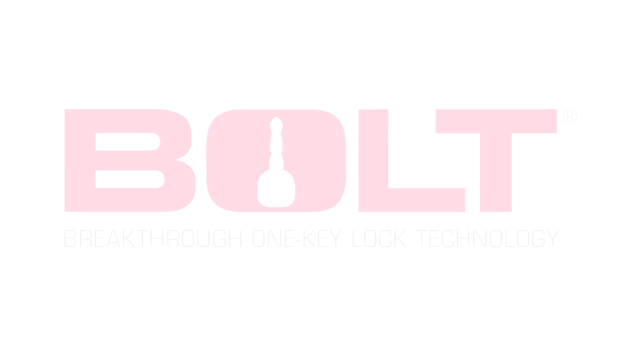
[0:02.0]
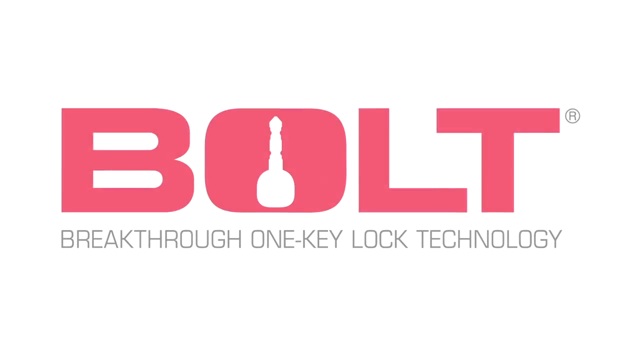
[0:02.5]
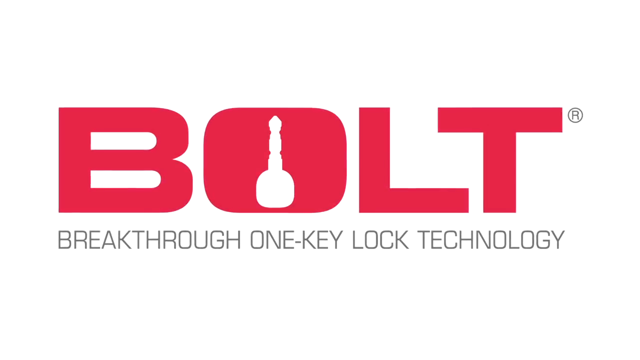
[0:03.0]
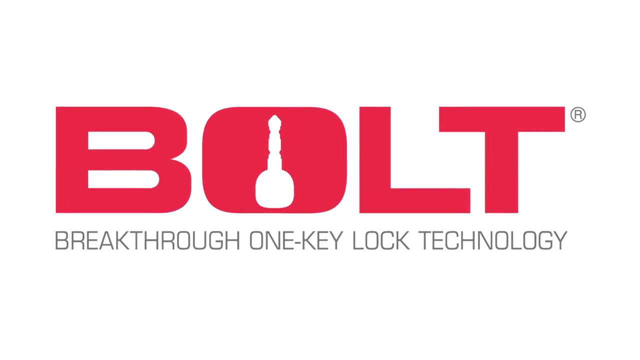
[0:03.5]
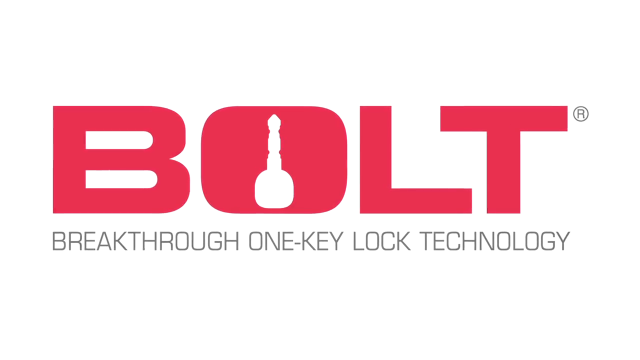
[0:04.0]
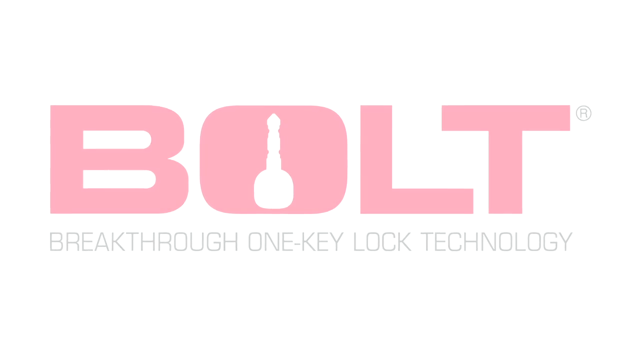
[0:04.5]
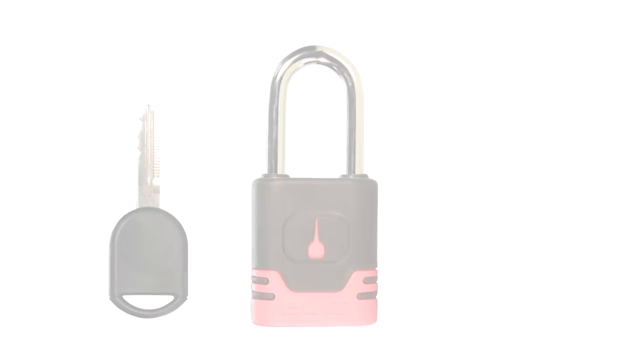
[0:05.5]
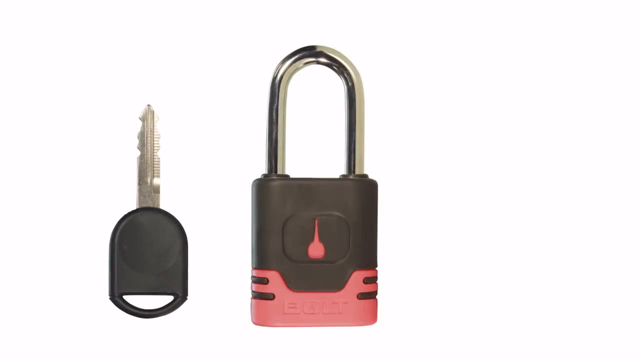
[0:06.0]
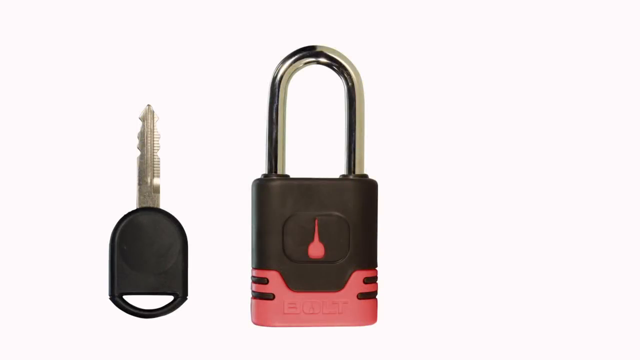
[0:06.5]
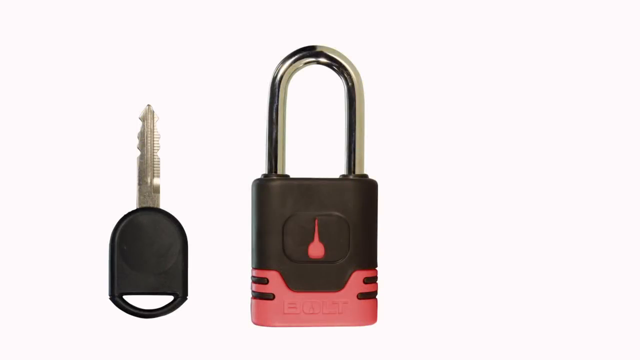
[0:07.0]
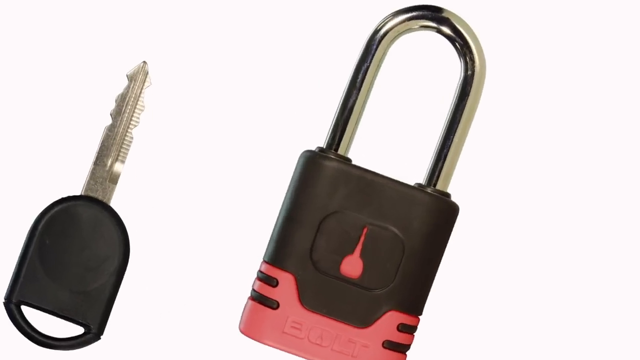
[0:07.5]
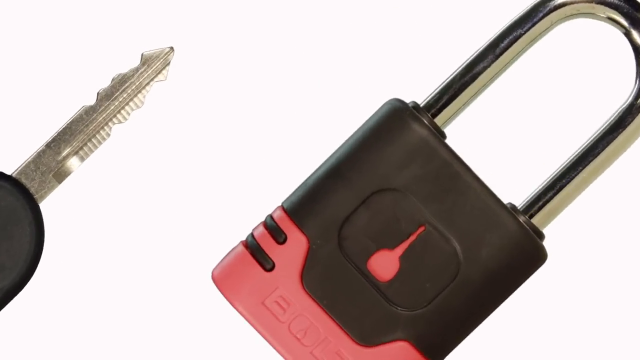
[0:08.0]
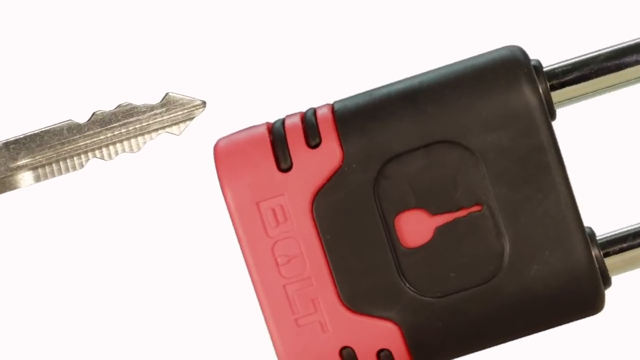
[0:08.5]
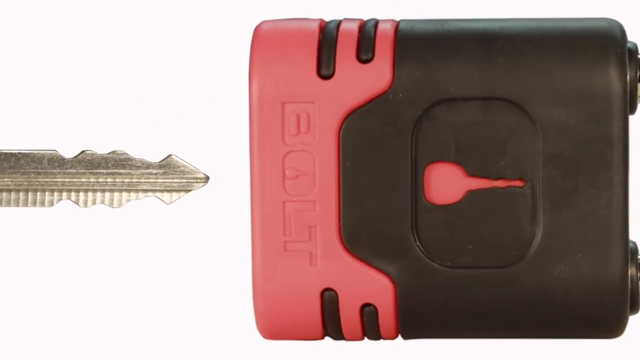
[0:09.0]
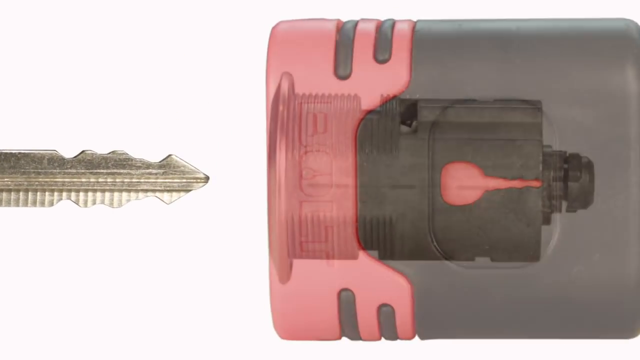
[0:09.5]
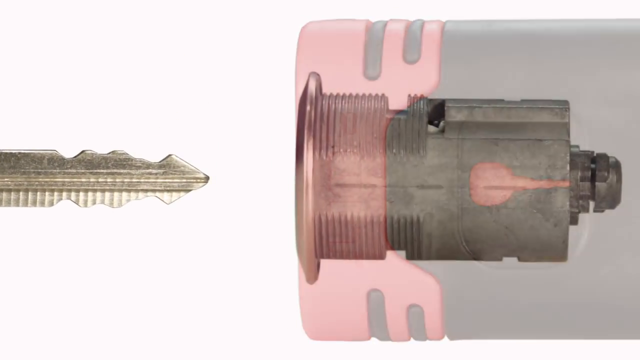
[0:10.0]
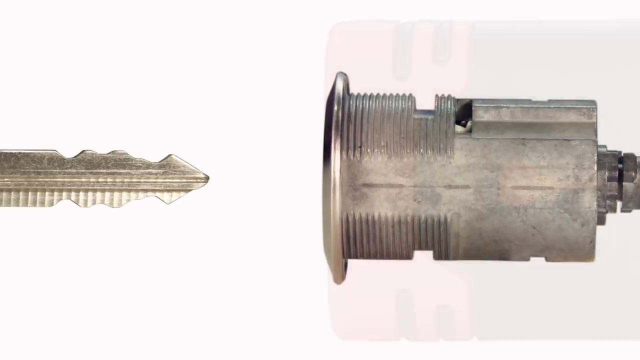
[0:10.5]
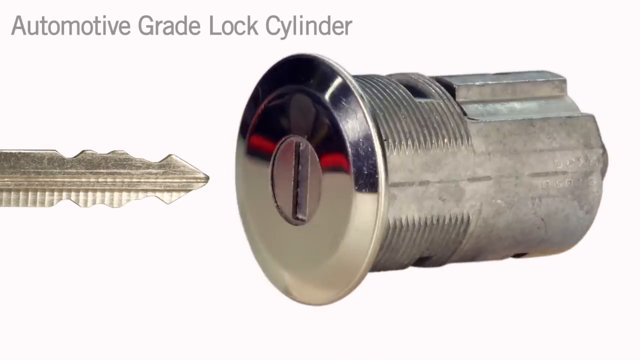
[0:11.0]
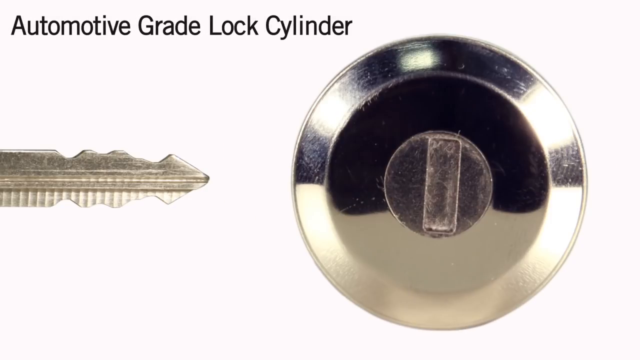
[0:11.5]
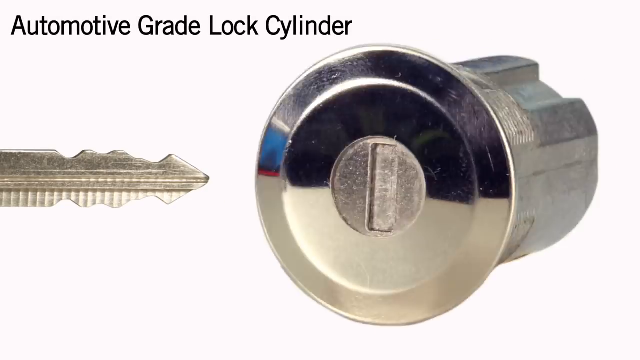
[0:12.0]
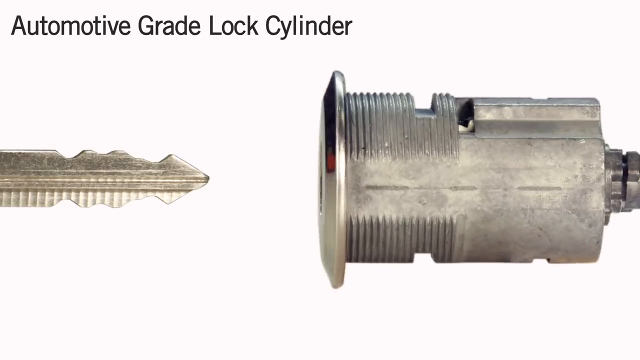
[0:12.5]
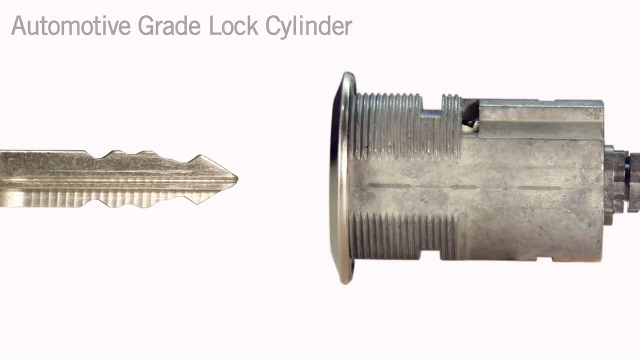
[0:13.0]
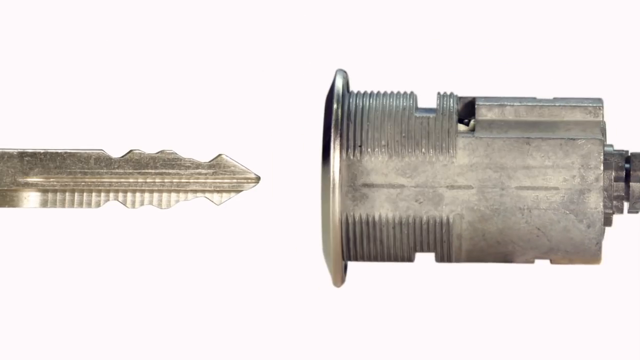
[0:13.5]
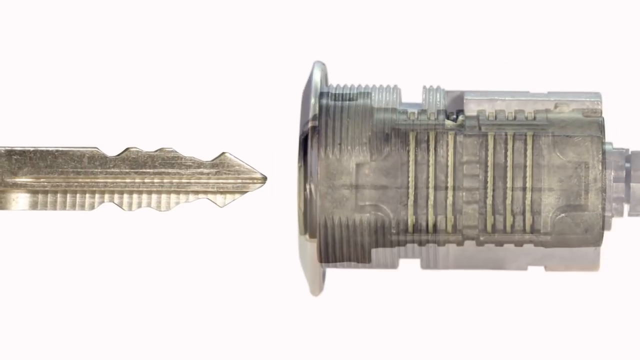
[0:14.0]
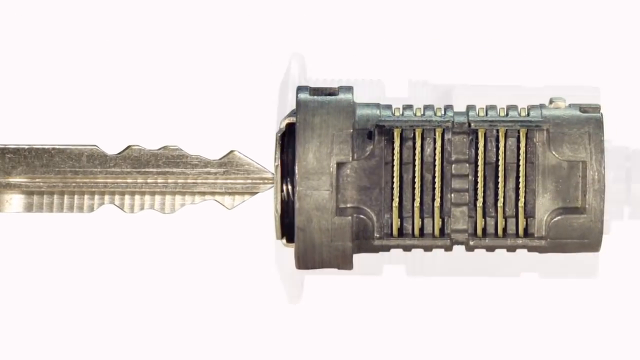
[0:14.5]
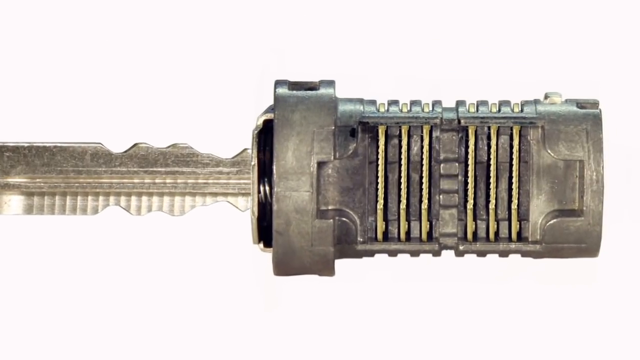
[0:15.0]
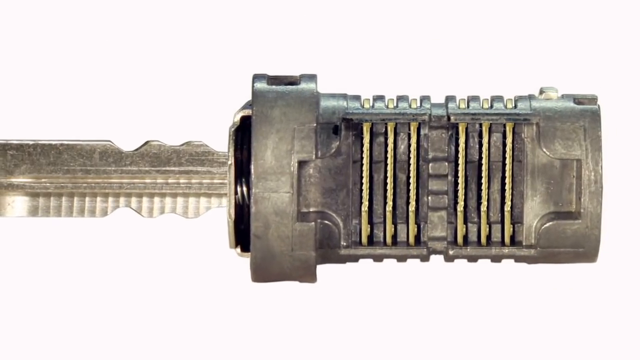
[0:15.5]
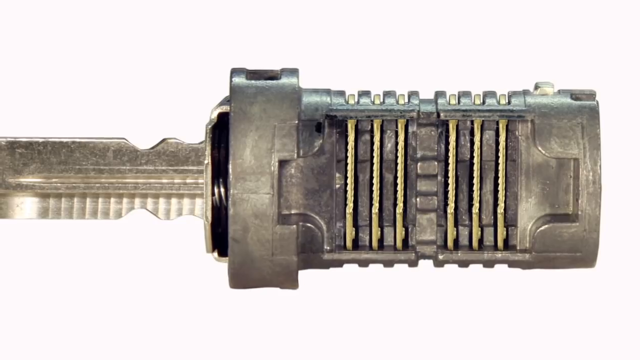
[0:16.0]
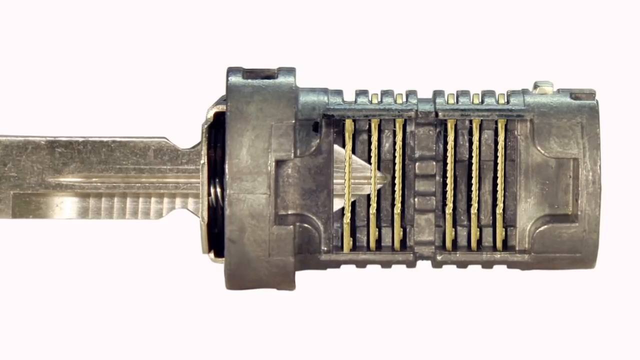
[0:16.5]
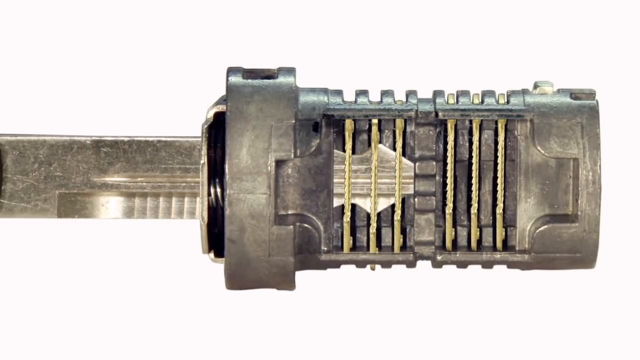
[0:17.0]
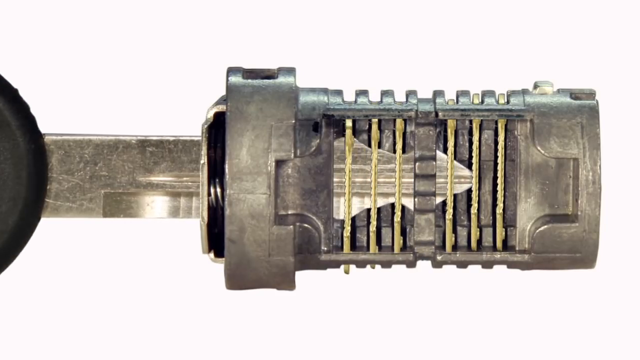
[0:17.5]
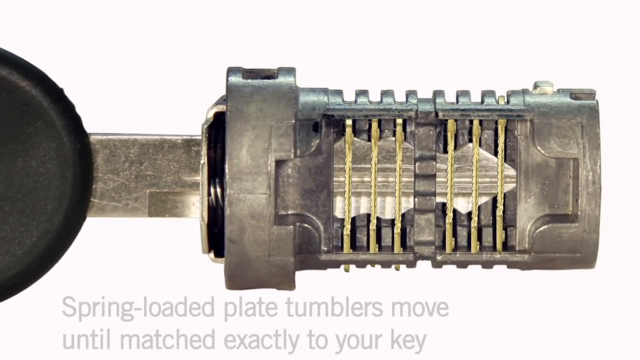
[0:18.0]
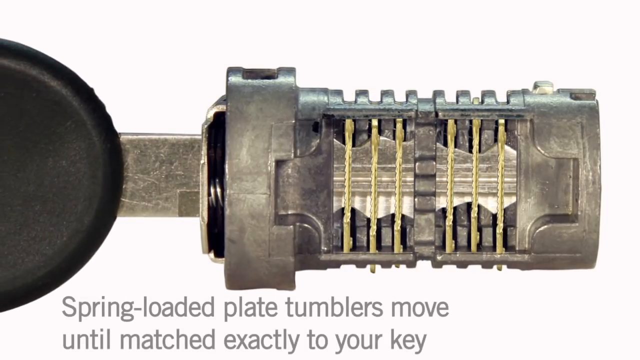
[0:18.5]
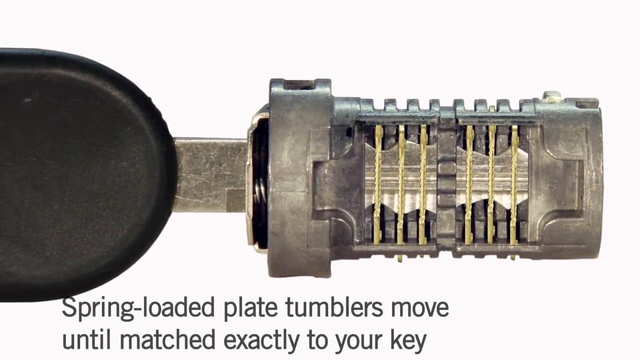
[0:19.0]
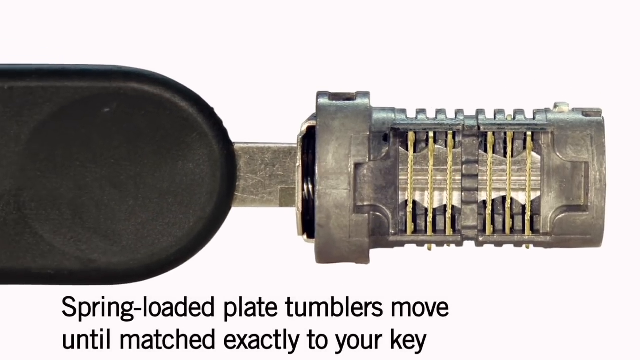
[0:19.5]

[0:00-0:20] A black screen transitions into a white screen showing the logo "BOLT" in plain pink lettering, where the O has a key emblem in its center instead of an ordinary round cutout. Beneath it is the subtext "breakthrough one key lock technology". The screen then fades out to a black and white lock and key system, which fades into a demonstration of how the lock works. An automotive grade lock cylinder is displayed inside the lock shell, and the key is put into the lock shell to reveal its inner mechanisms. As the key goes in, the tumblers sort of bounce around and then quickly return to their resting position.